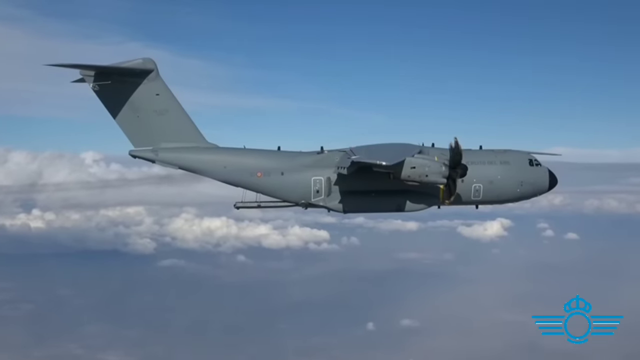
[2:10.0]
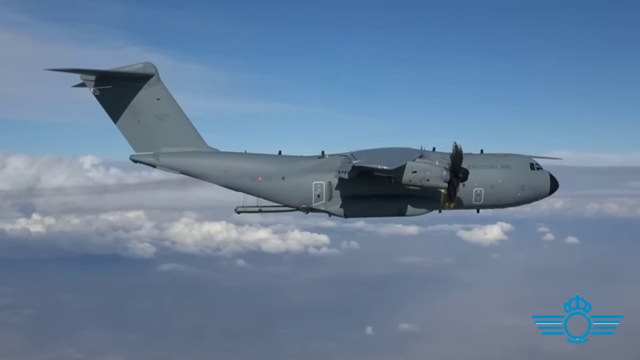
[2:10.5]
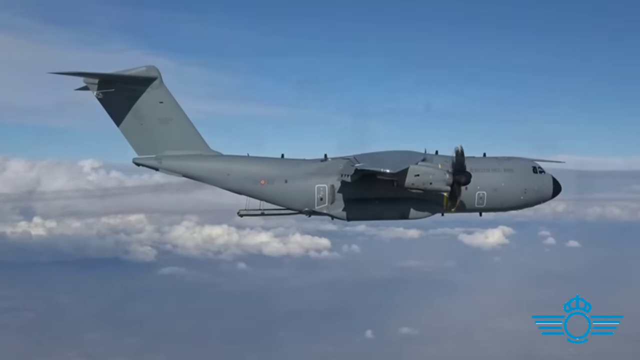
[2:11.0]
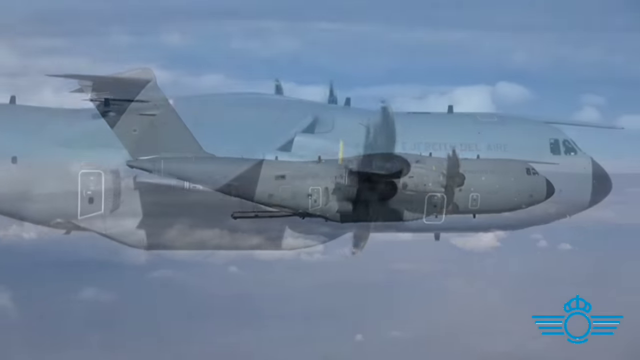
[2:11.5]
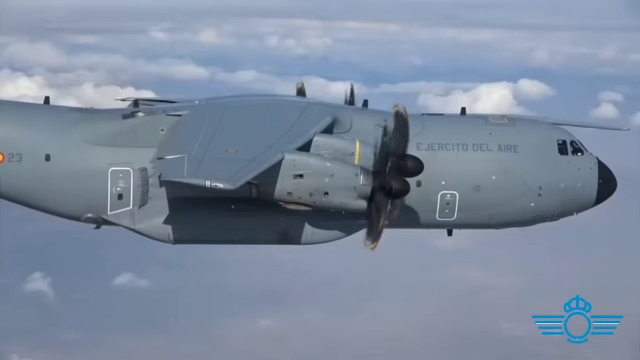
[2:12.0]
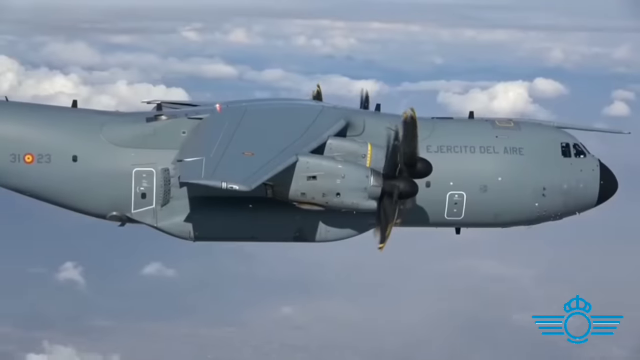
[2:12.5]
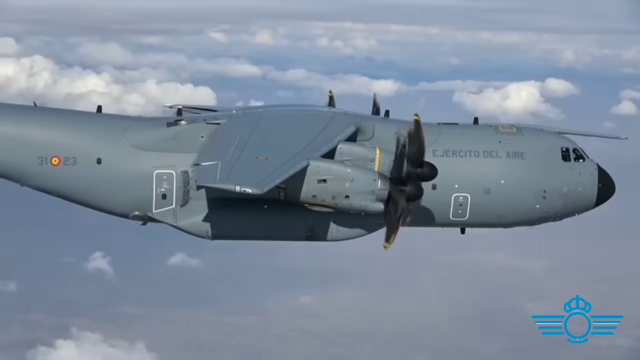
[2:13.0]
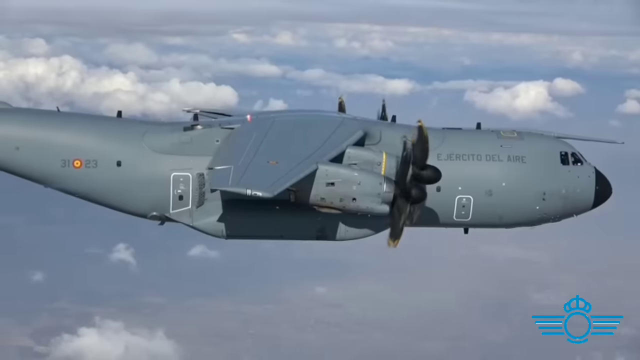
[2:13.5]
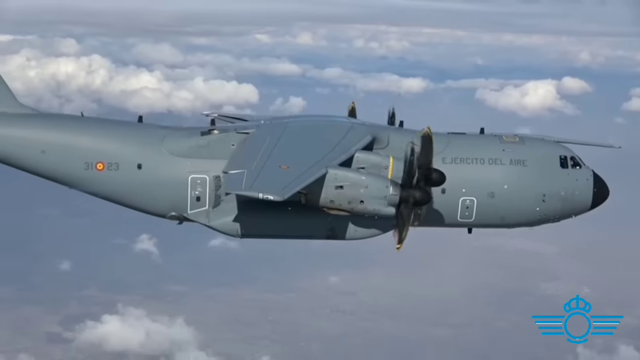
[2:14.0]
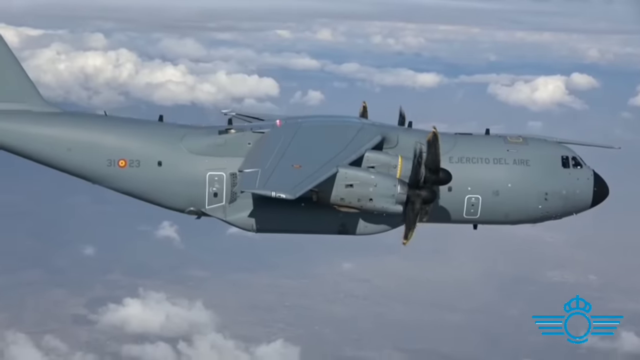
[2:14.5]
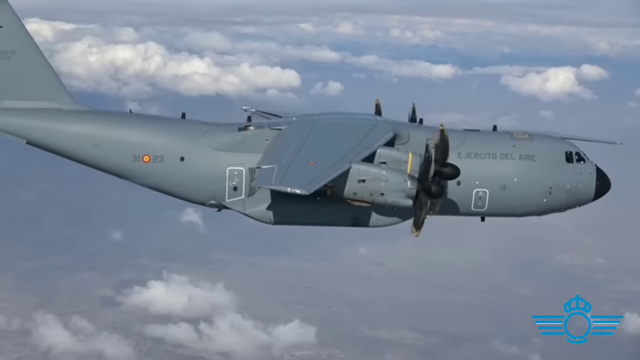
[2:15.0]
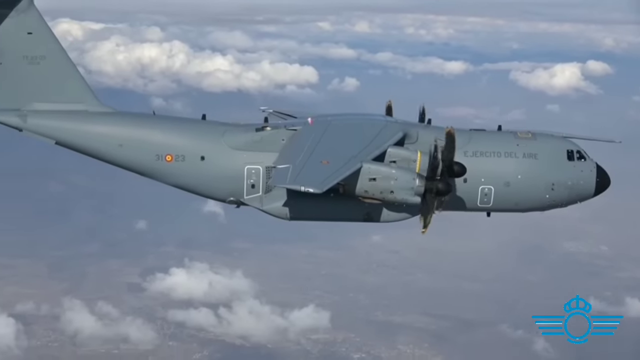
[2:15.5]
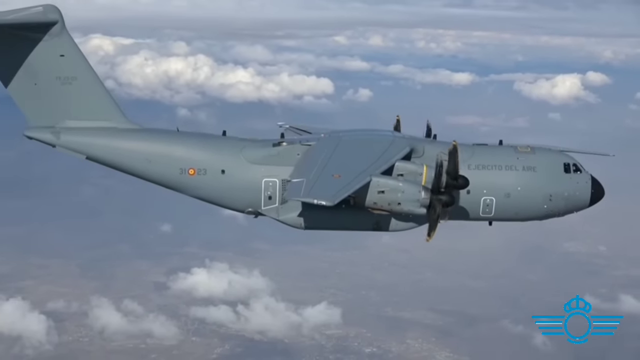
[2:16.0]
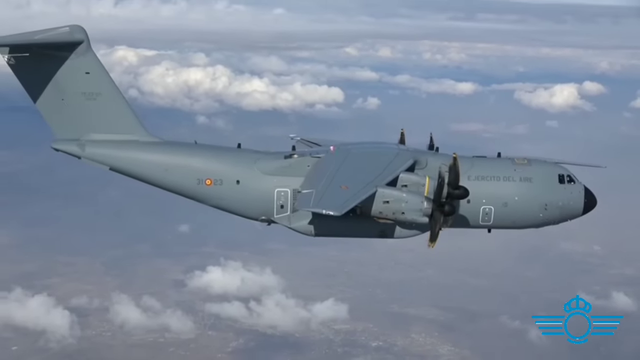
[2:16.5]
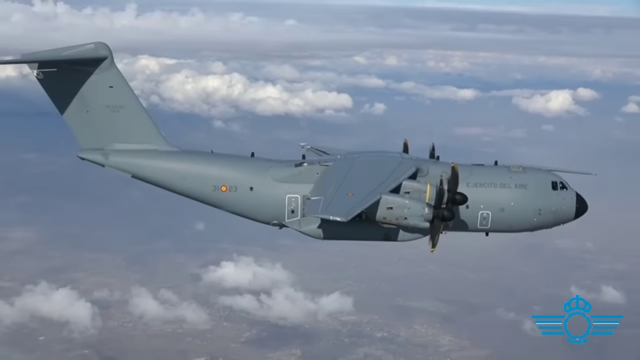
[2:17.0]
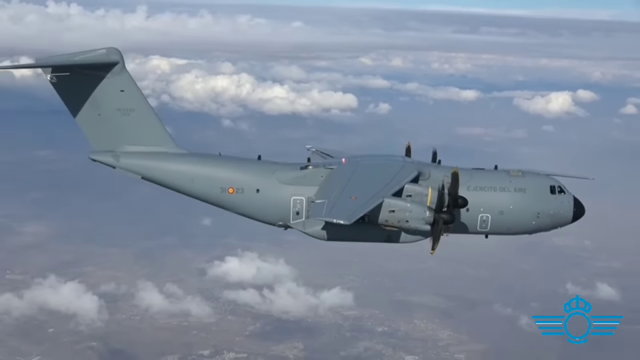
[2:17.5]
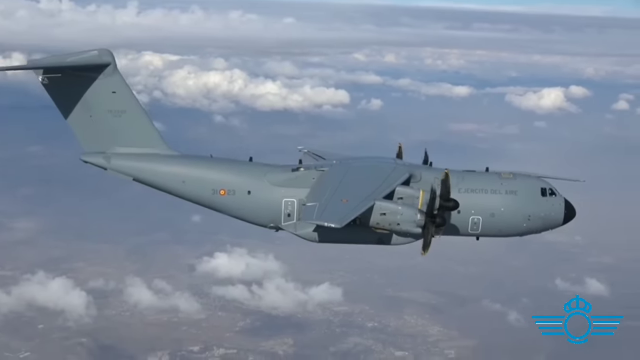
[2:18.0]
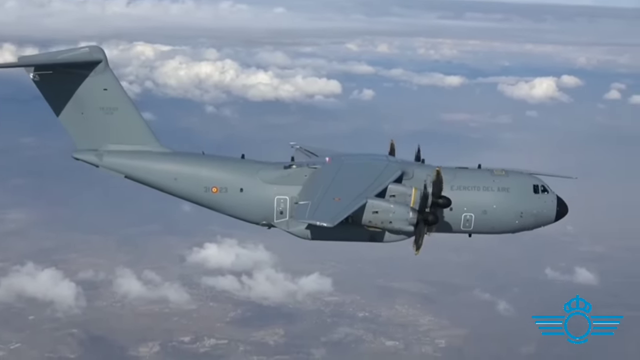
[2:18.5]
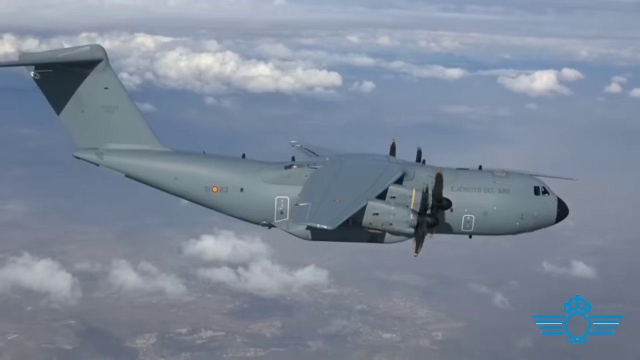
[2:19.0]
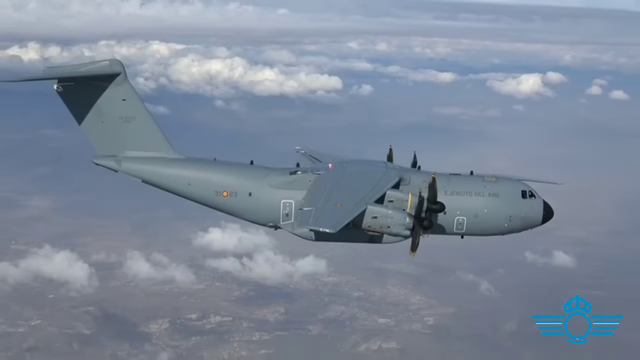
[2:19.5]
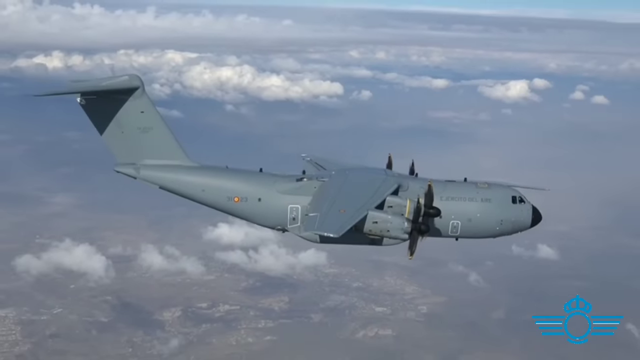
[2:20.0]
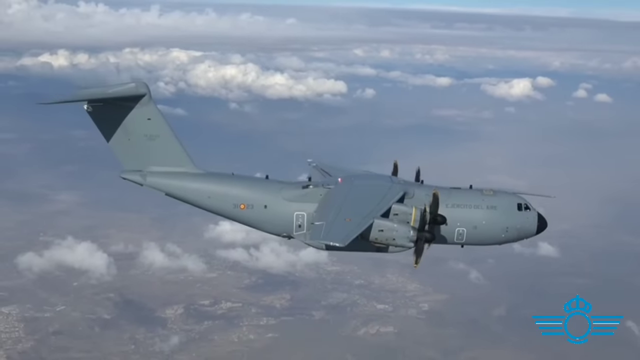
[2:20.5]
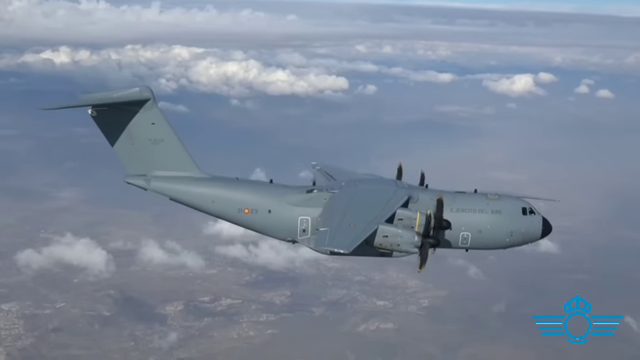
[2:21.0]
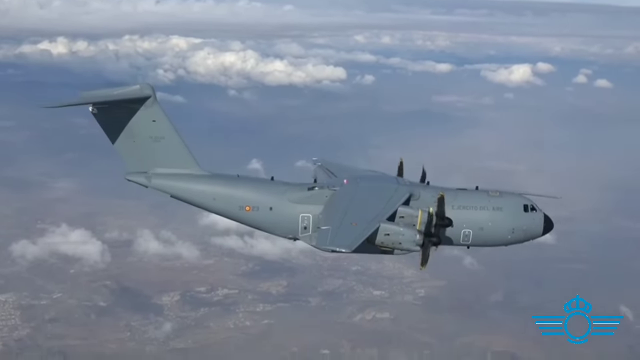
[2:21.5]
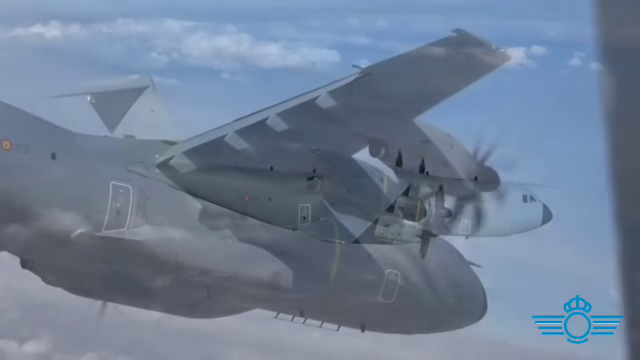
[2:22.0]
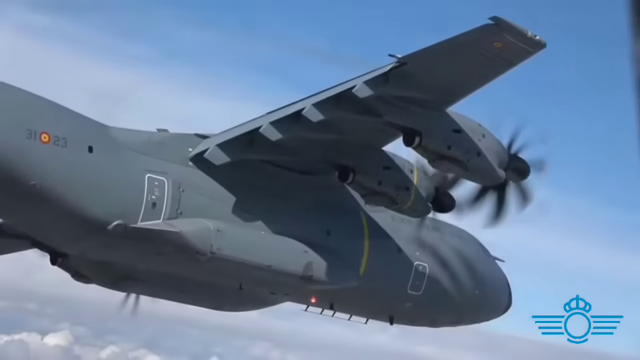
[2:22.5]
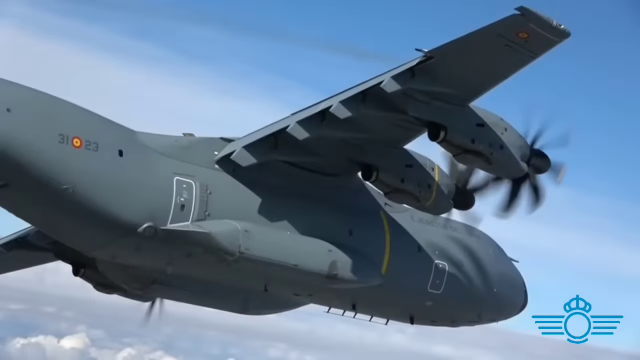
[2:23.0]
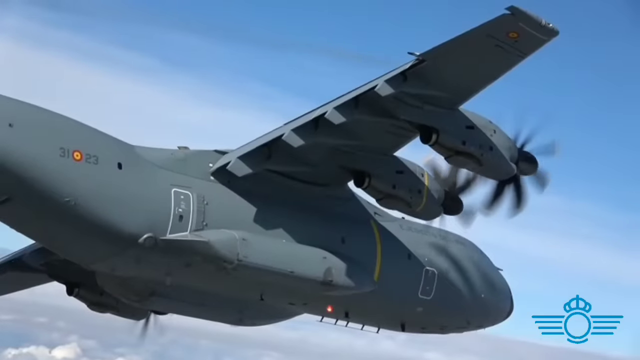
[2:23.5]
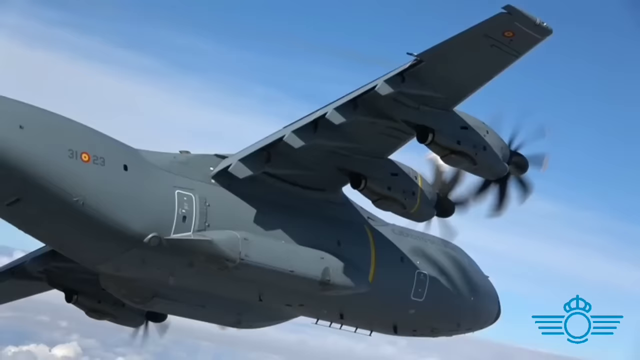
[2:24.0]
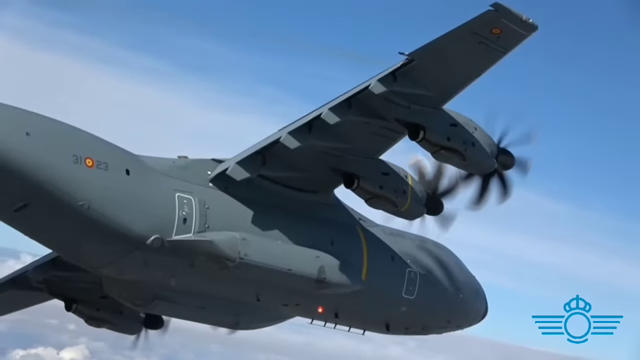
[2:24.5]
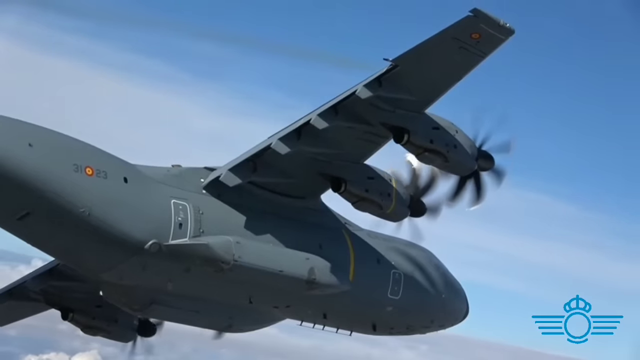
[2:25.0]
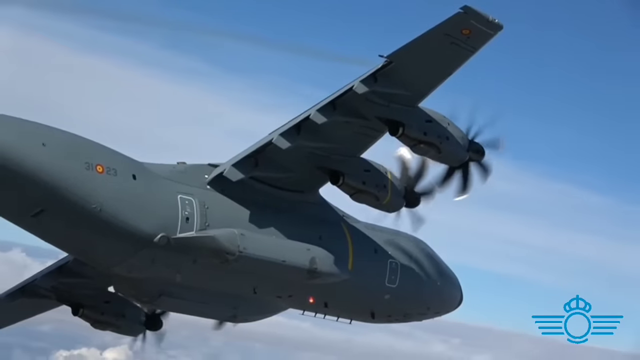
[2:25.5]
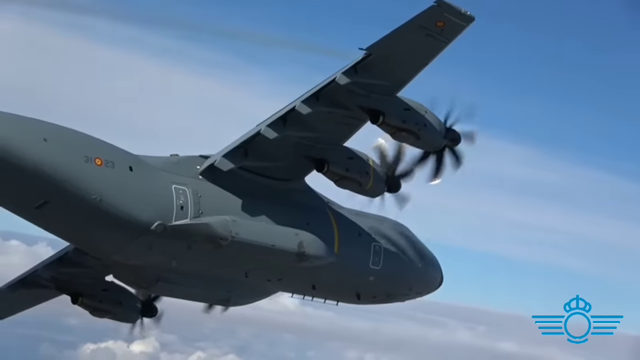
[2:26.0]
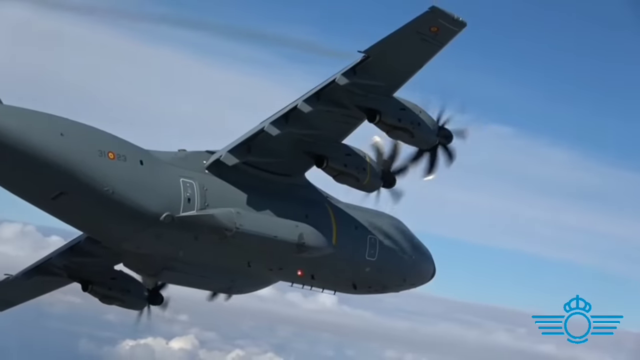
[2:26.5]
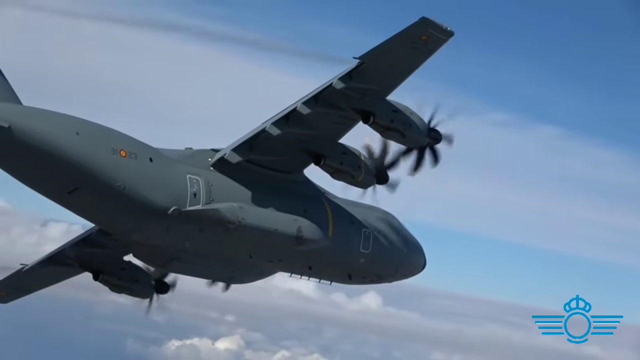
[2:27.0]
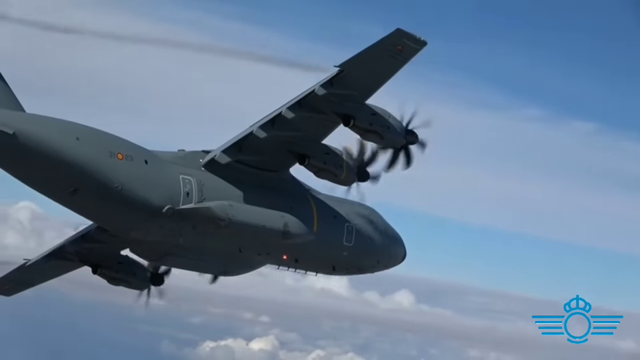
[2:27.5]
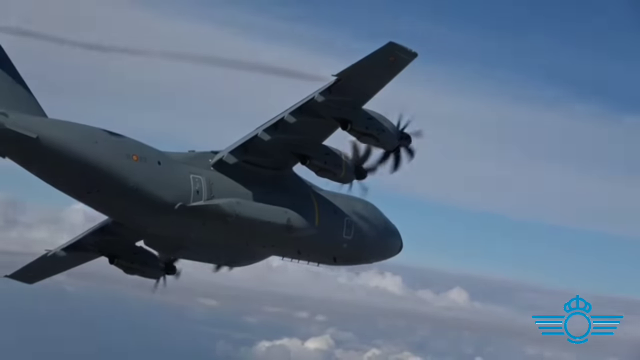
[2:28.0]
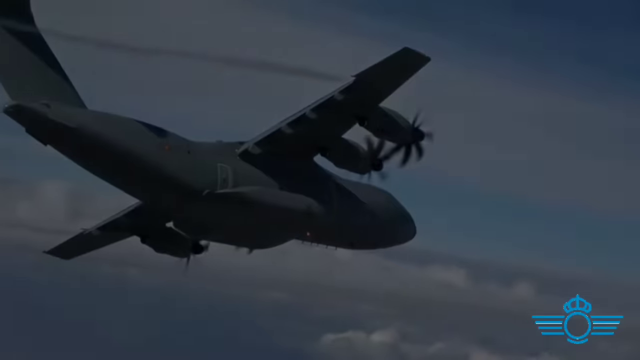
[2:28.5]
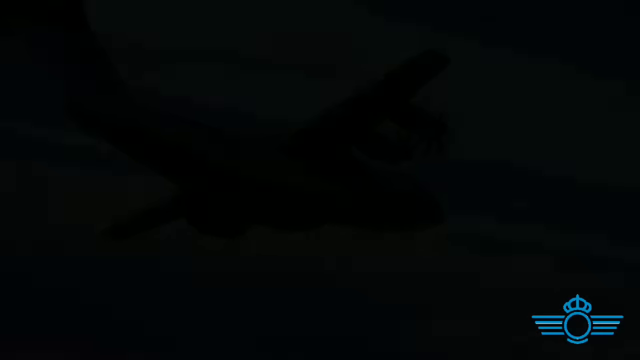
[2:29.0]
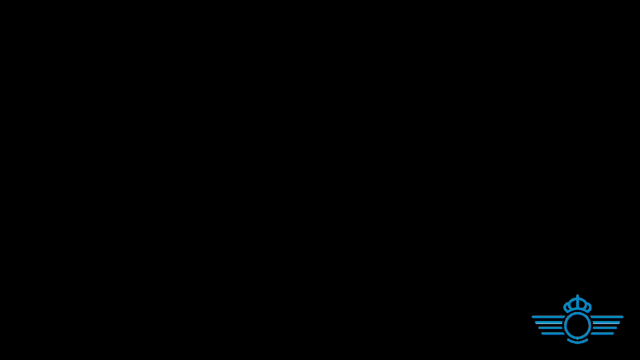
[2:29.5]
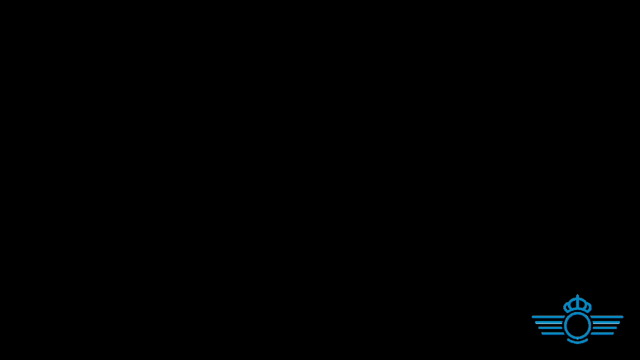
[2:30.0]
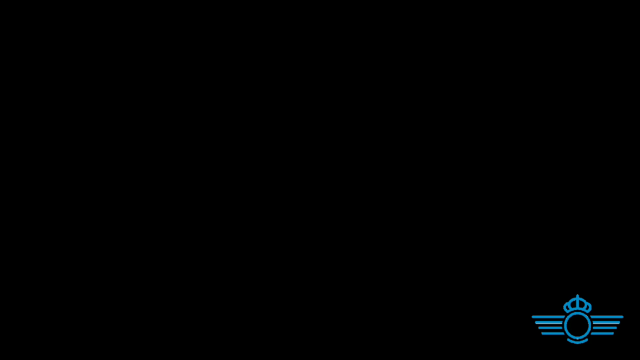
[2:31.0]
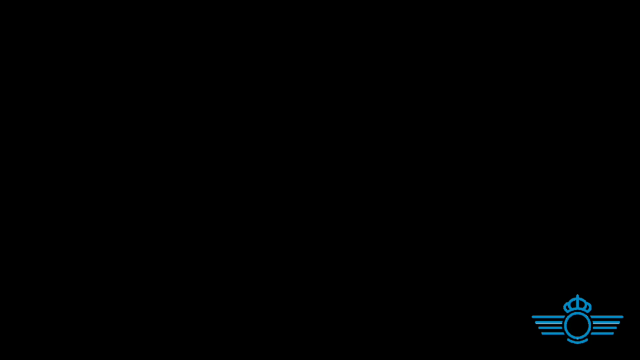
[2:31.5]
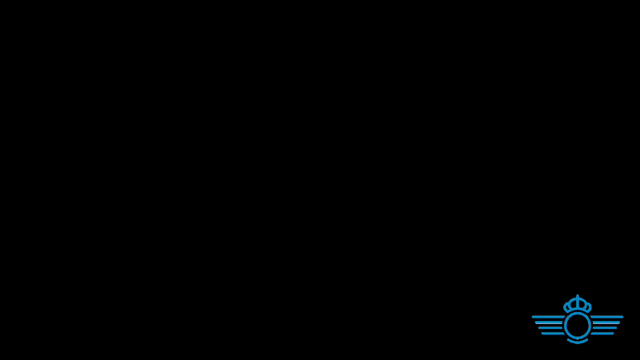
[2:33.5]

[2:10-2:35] An outside side view of the aircraft shows a plane that appears to be matte gray. At least two propellers are on the right front side of the plane, approximately toward the middle section. The nose end and the tail end of the plane are visible. The plane appears to be at a standstill in the air, with lots of fluffy clouds and a clear blue sky in the background. Different aerial views of the airplane follow, including a view from underneath looking up at the spinning propellers, with the propellers on both sides of the plane visible. The plane looks to be at a standstill, perhaps because the airmen are about to exit and make their jump.